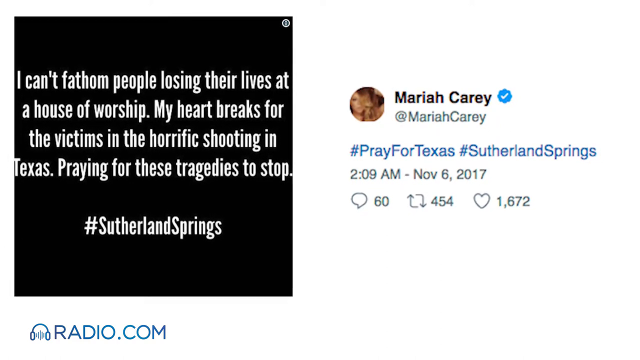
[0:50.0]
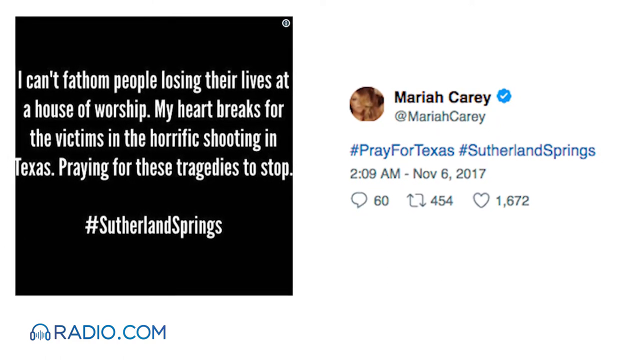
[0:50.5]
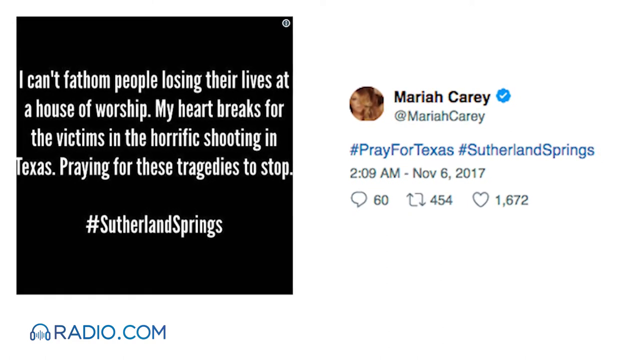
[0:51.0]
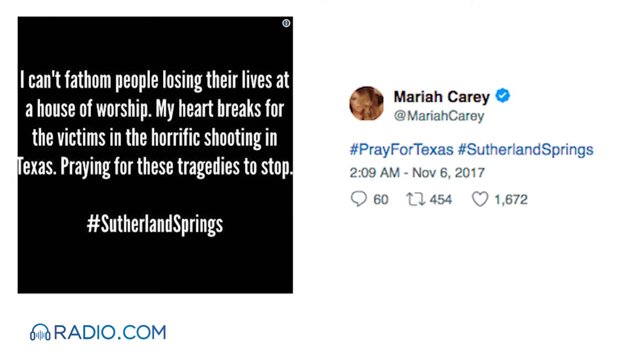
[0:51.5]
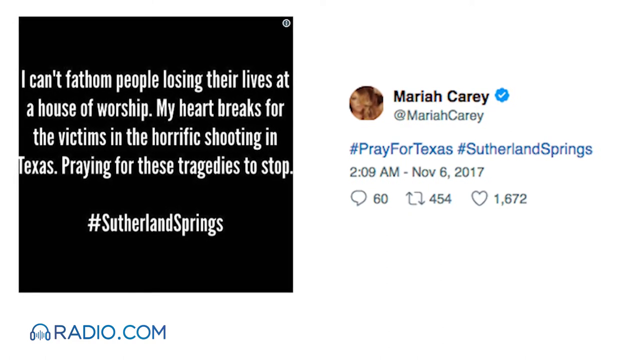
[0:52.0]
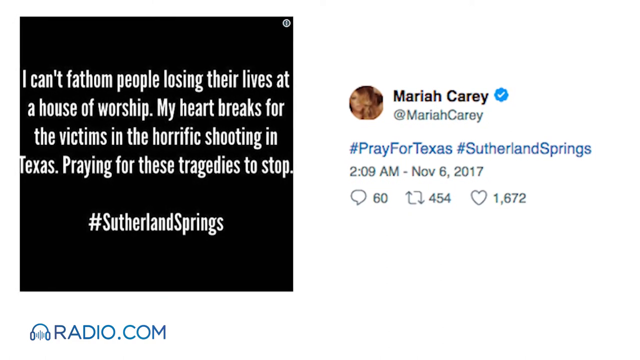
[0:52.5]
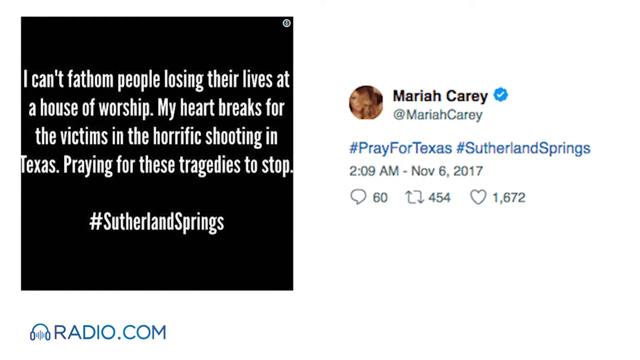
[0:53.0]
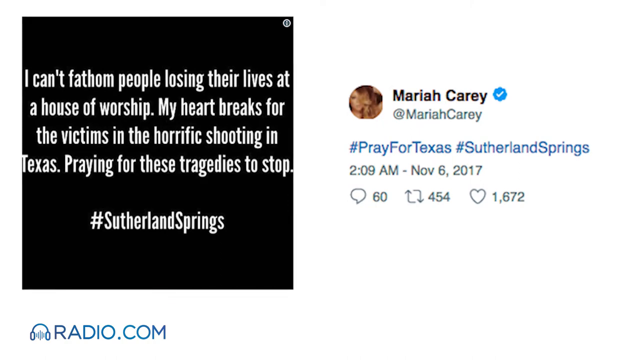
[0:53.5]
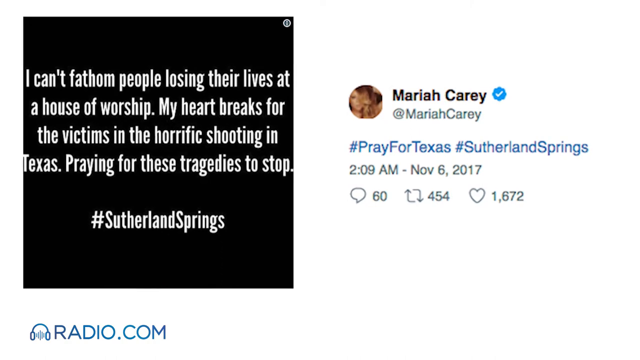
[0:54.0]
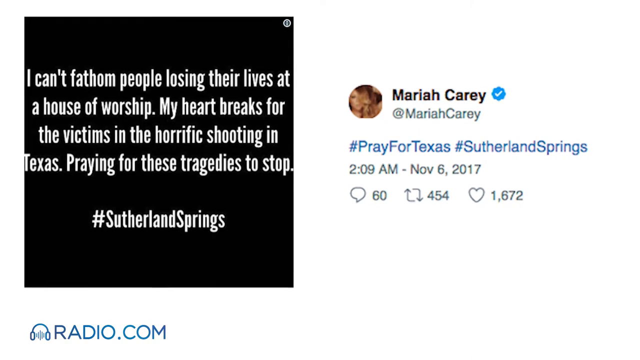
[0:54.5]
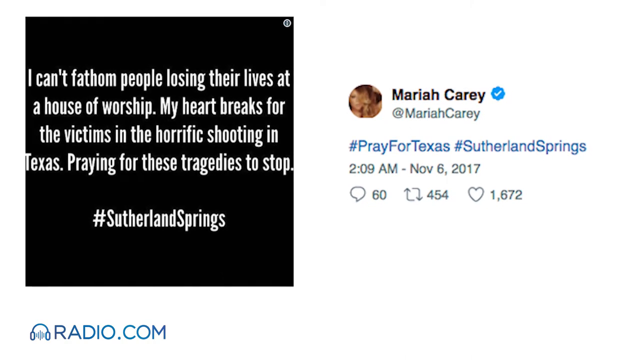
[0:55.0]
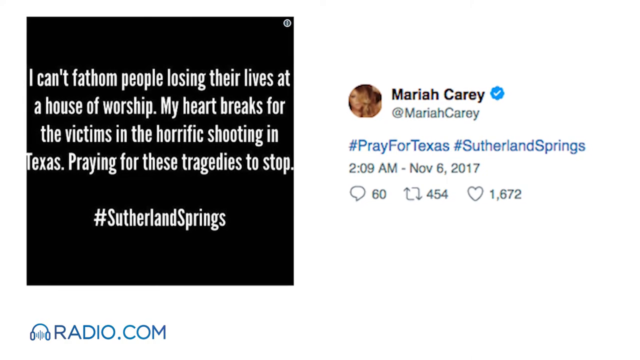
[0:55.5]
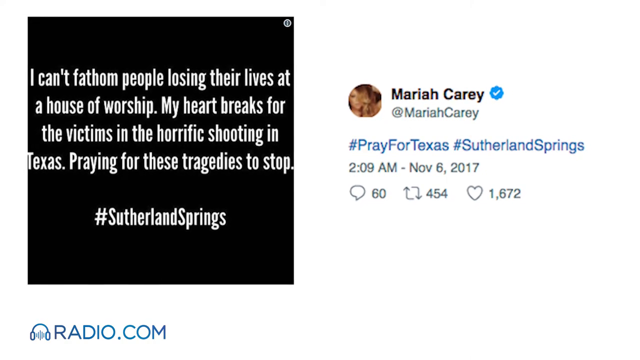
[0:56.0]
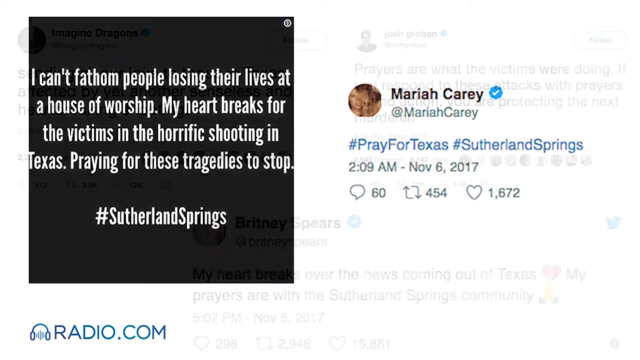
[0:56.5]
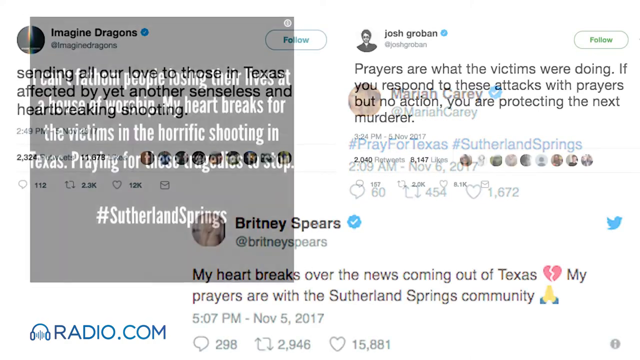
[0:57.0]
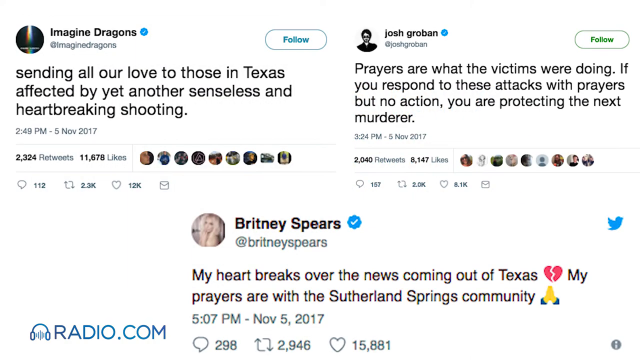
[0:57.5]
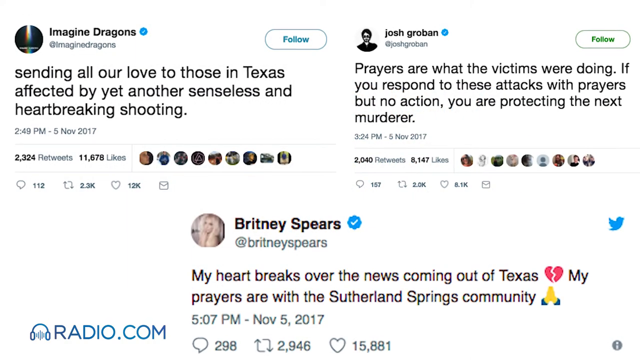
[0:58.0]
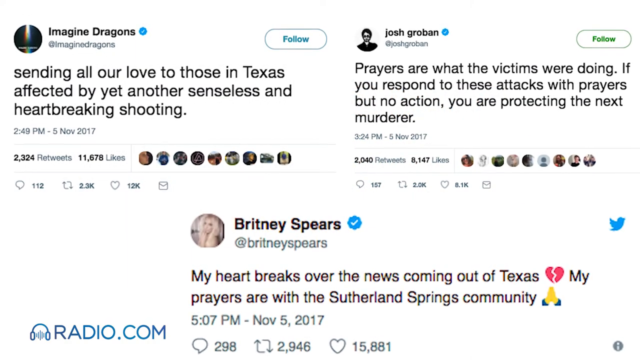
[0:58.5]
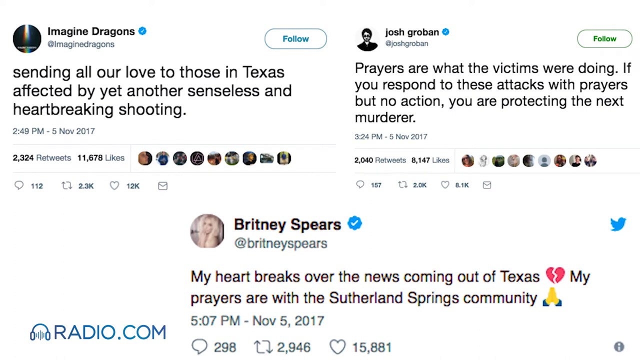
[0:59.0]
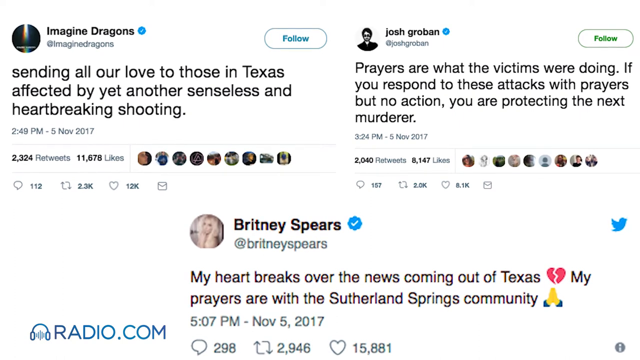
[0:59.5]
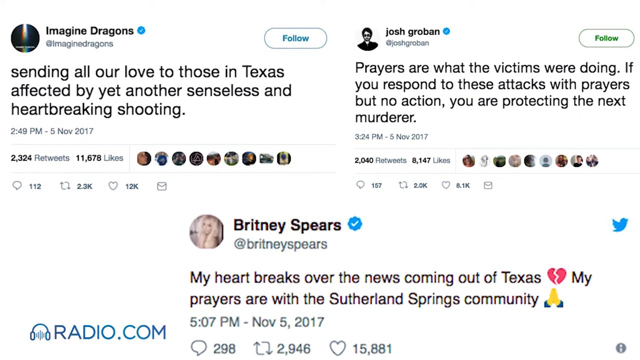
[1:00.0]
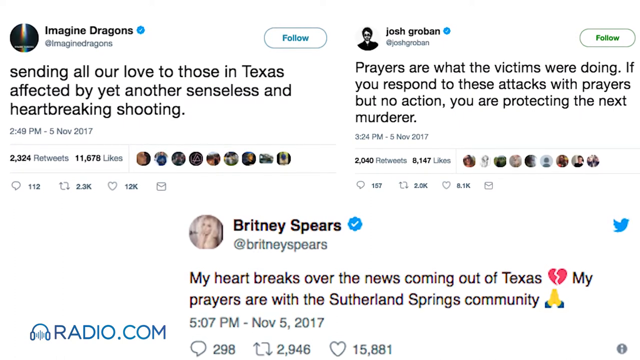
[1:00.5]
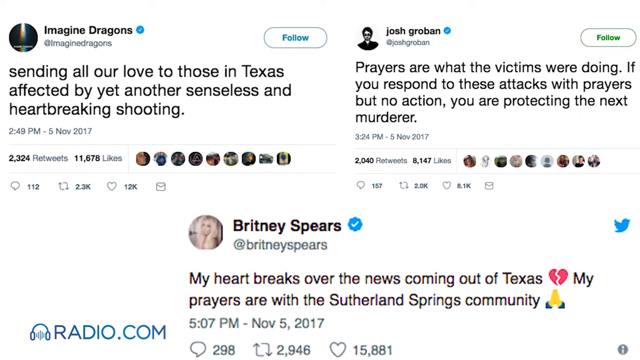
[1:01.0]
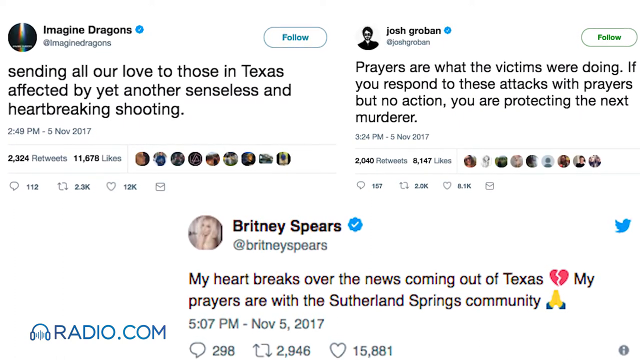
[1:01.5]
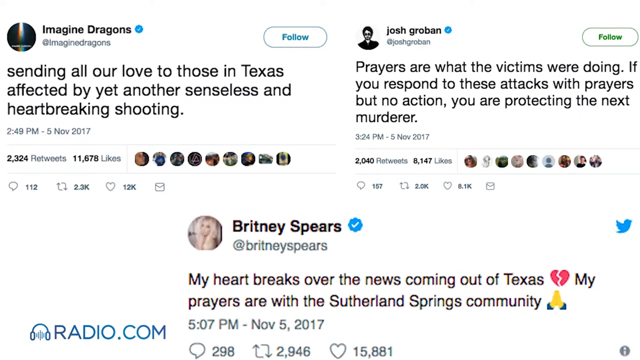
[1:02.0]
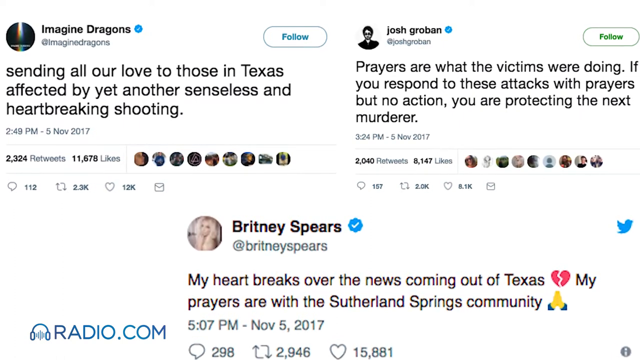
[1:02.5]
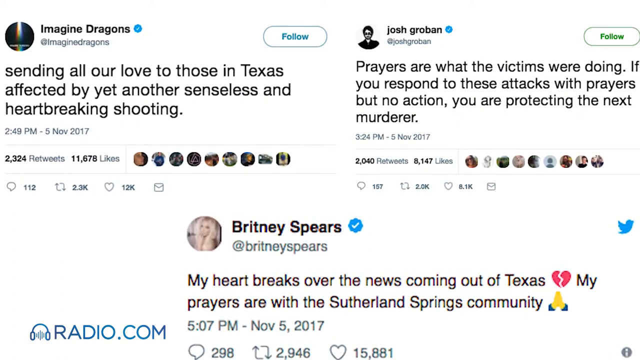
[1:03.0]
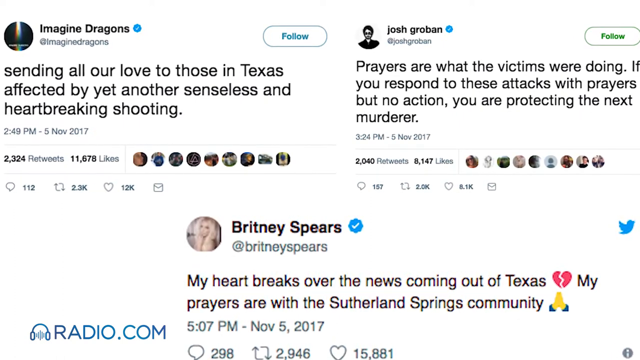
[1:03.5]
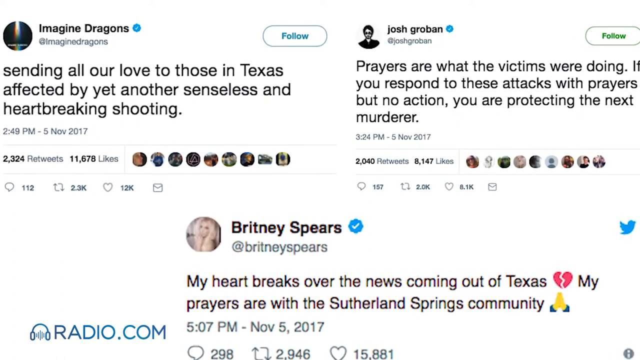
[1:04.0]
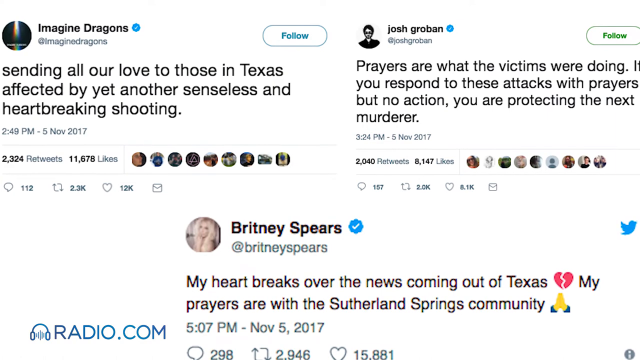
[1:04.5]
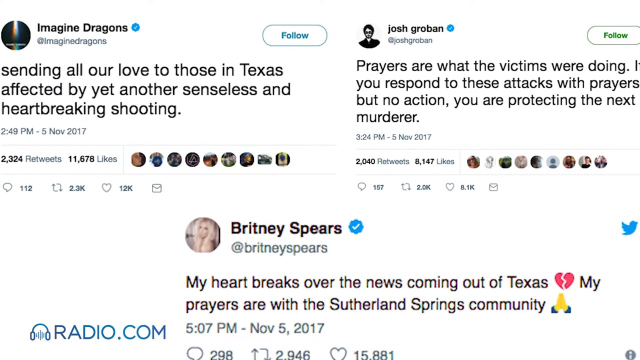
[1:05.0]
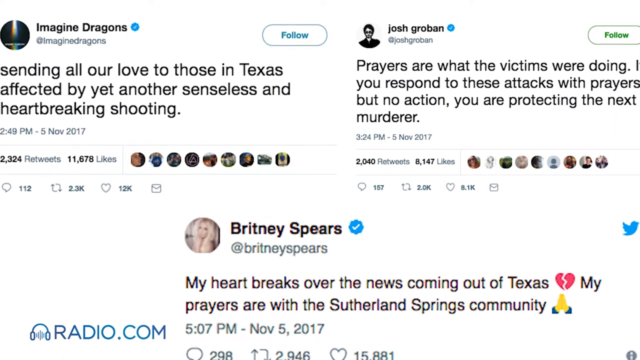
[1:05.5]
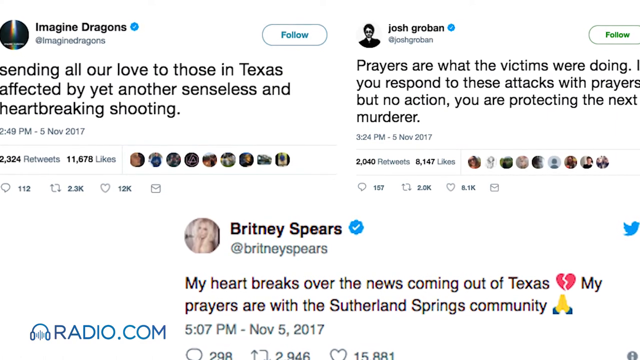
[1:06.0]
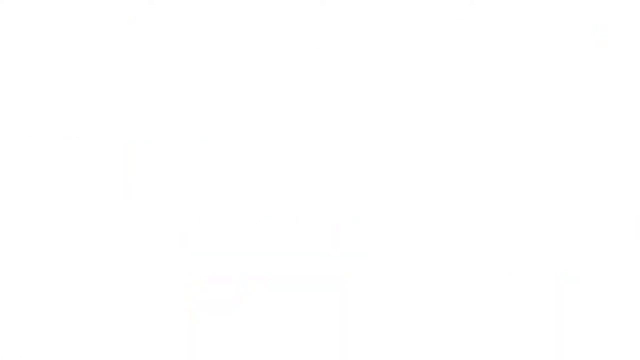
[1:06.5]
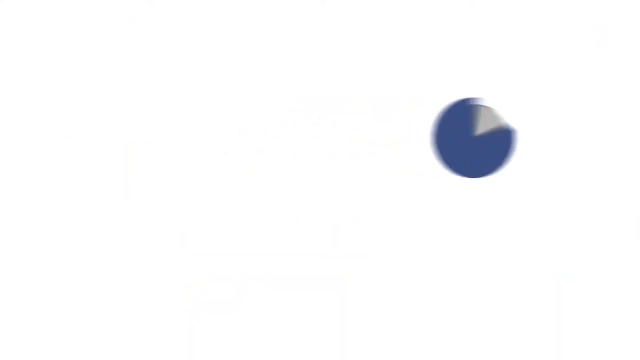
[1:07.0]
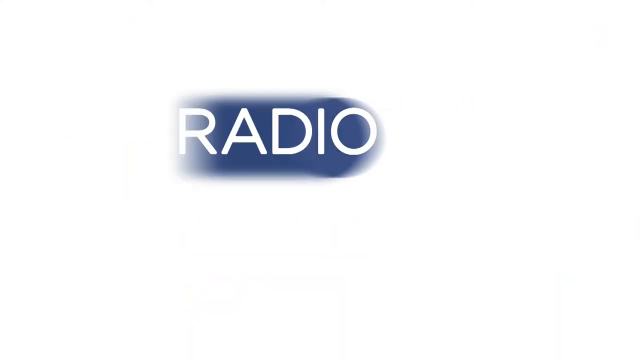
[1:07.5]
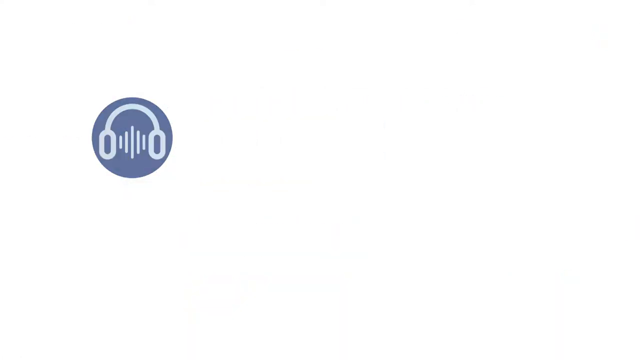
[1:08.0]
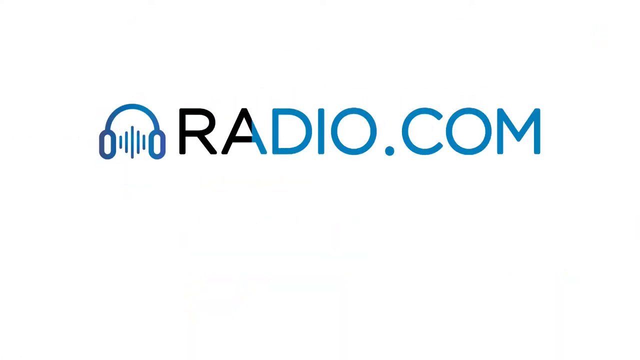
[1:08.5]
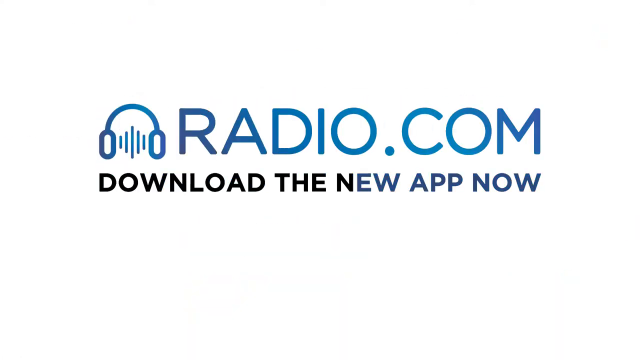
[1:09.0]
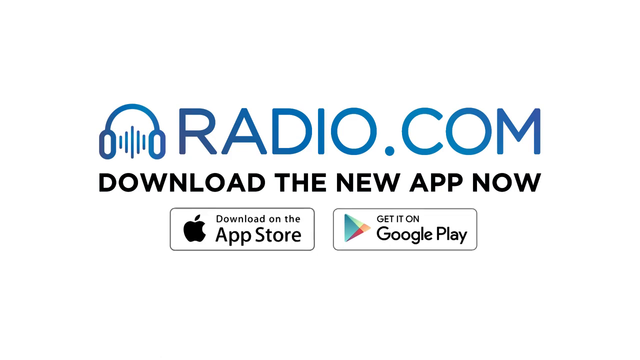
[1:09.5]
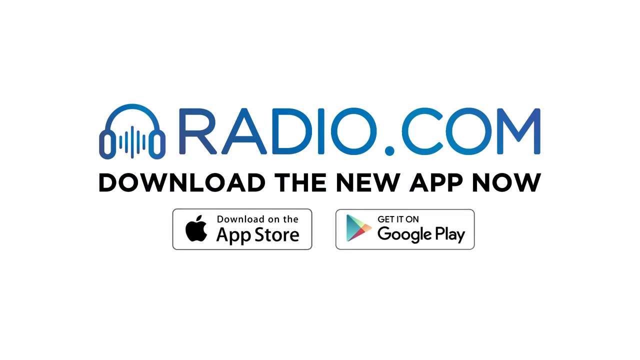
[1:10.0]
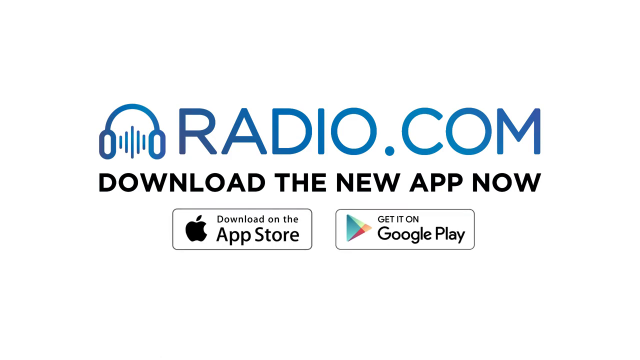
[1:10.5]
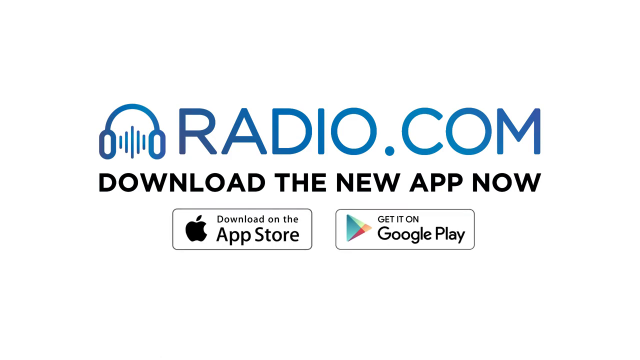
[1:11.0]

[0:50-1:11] Tweets from three more accounts appear. The first is from Imagine Dragons: "Sending all our love to those in Texas affected by yet another senseless and heartbreaking shooting." On the right is one from Josh Groban: "Prayers are what the victims were doing. If you respond to these attacks with prayers but no action you are protecting the next murderer." The tweet underneath is from Britney Spears: "My heart breaks over the news coming out of Texas. My prayers are with the Sutherland Springs community," followed by a praying hands emoji and a heartbroken emoji. After the tweets, "radio.com" appears with its icon, headphones with radio waves in the middle. Text then says "download the new app now", with options to download on the App Store or get it on Google Play.